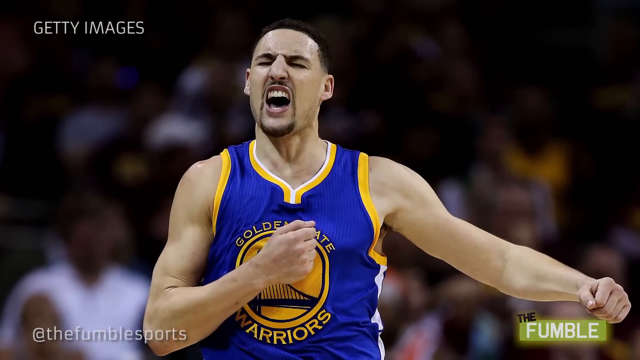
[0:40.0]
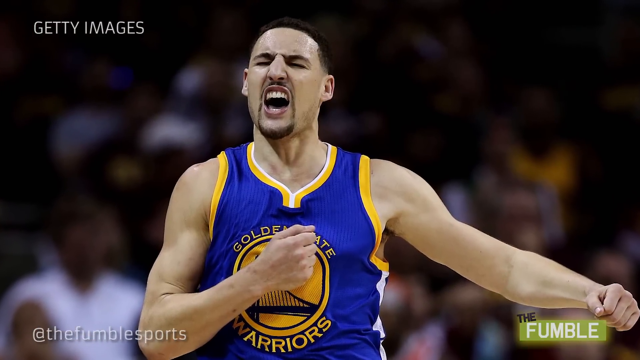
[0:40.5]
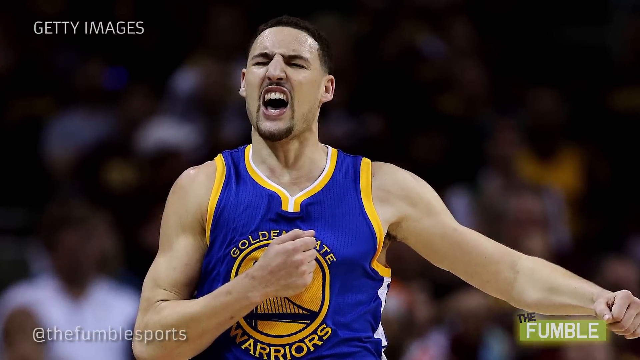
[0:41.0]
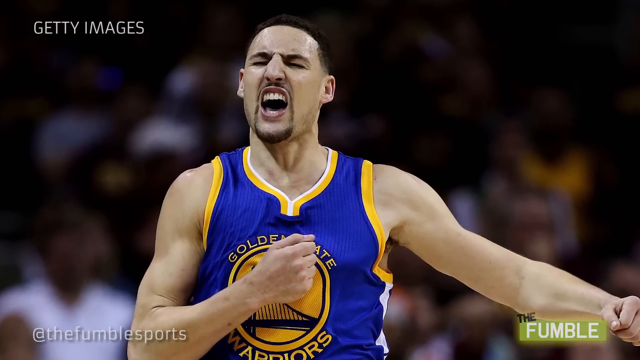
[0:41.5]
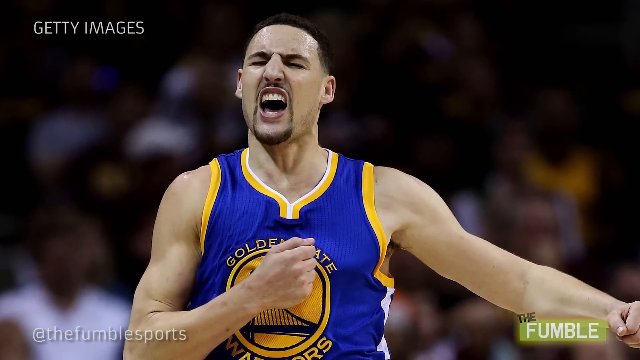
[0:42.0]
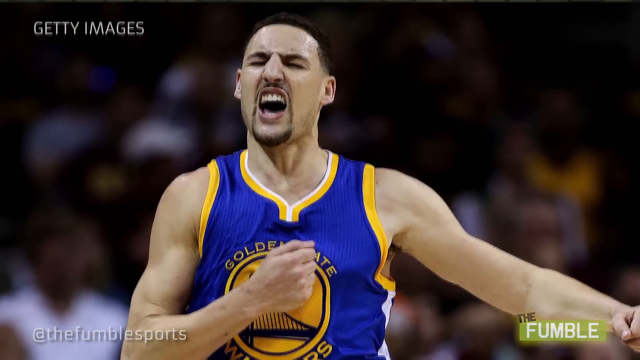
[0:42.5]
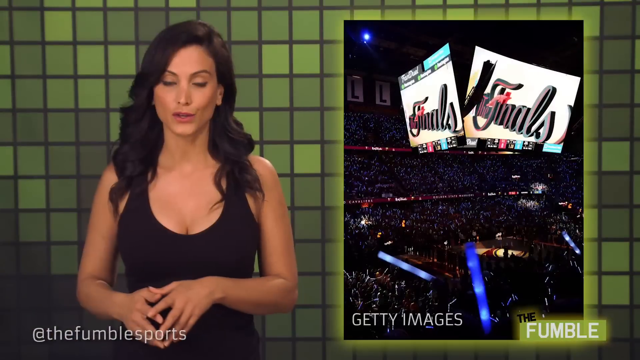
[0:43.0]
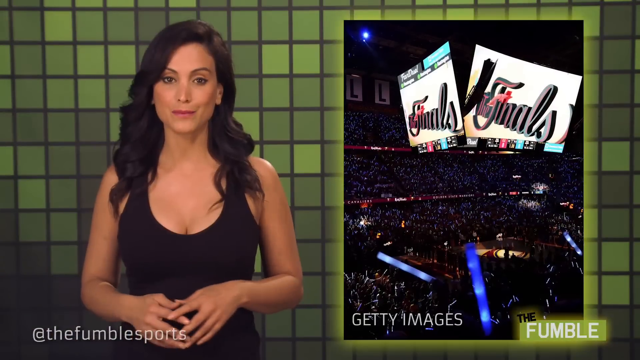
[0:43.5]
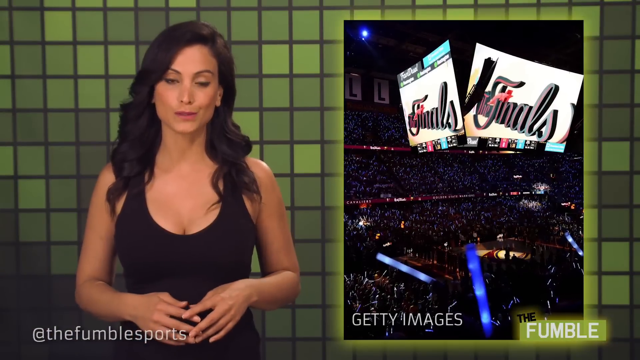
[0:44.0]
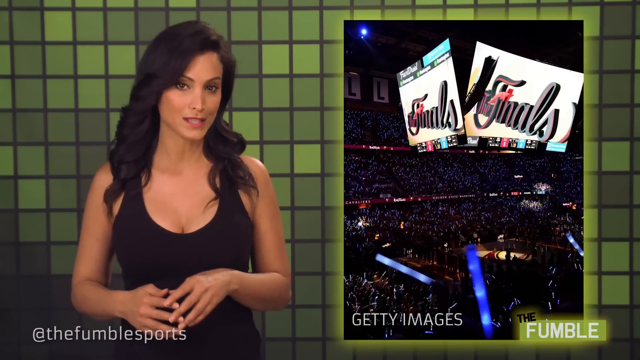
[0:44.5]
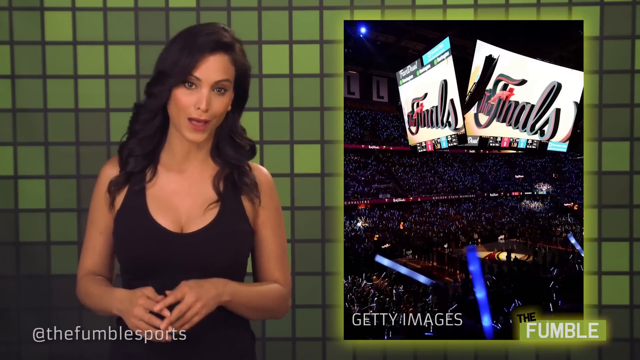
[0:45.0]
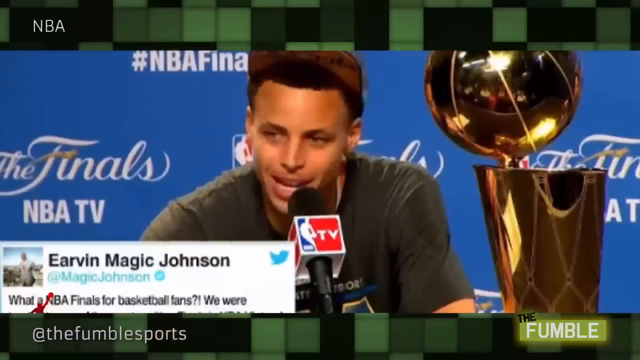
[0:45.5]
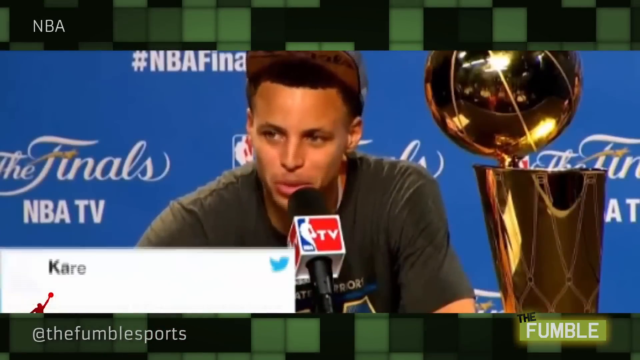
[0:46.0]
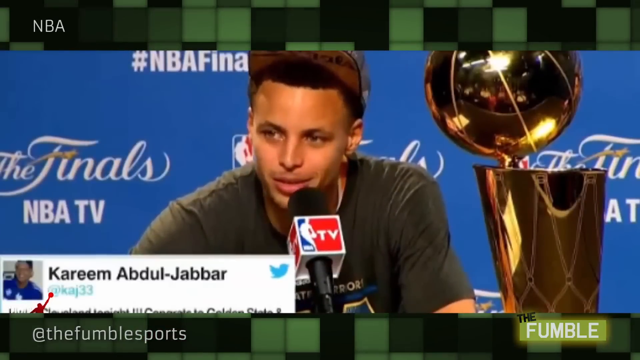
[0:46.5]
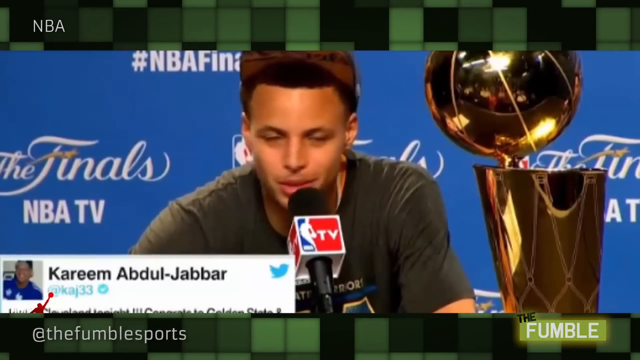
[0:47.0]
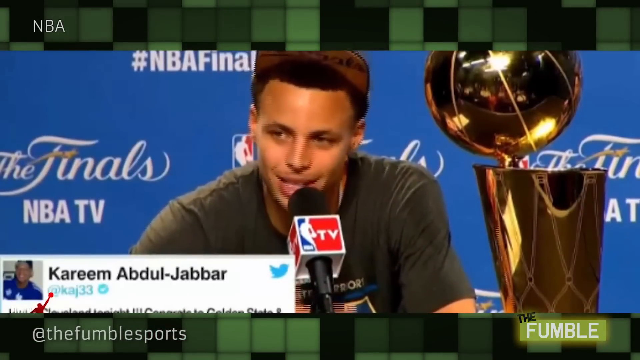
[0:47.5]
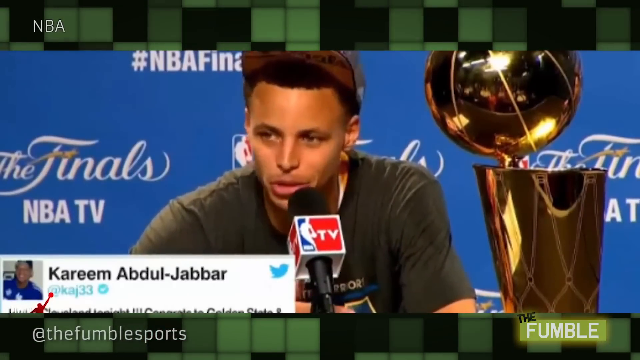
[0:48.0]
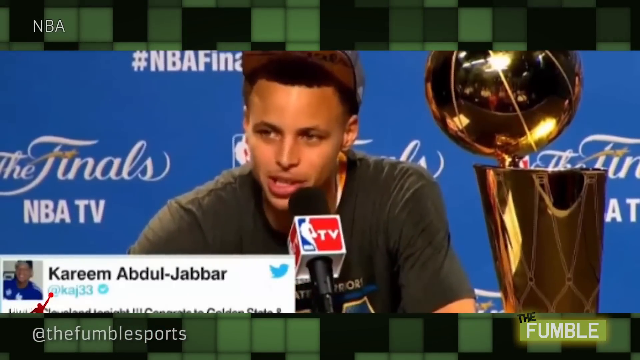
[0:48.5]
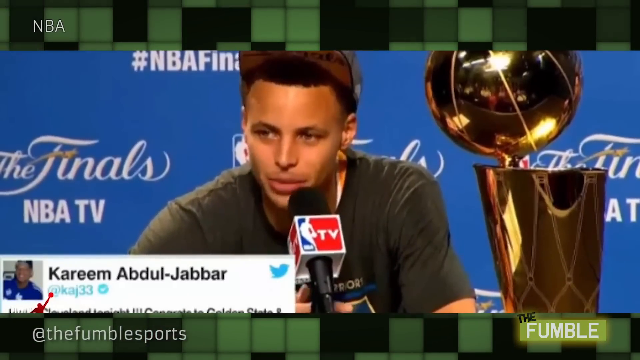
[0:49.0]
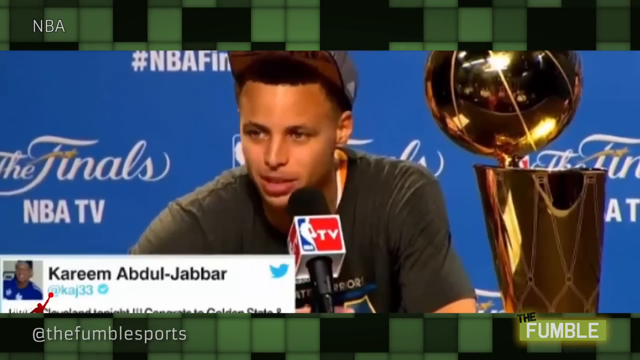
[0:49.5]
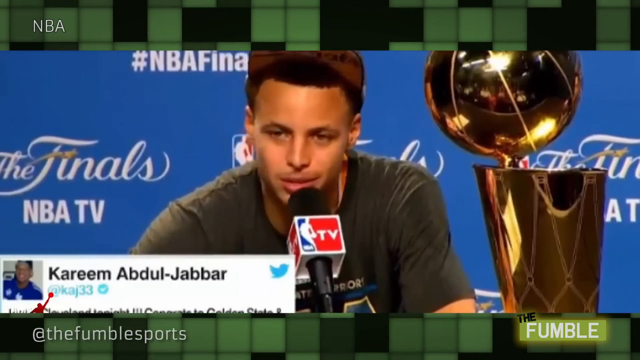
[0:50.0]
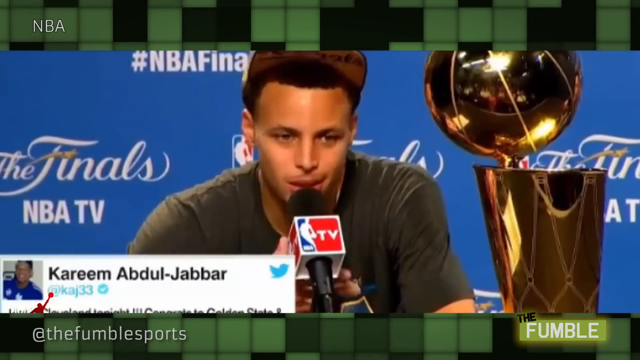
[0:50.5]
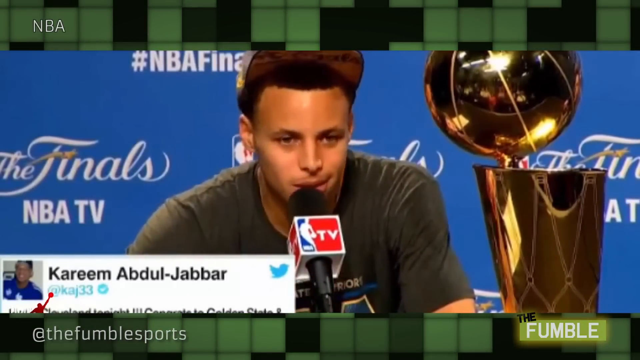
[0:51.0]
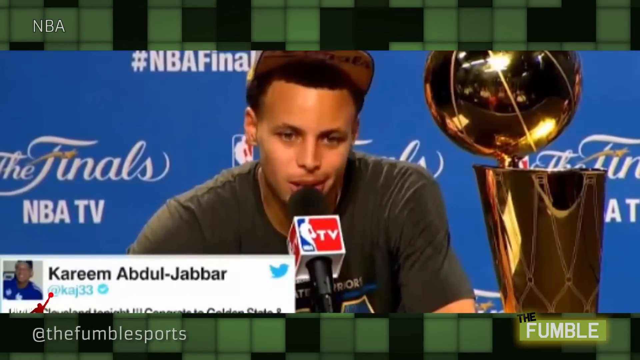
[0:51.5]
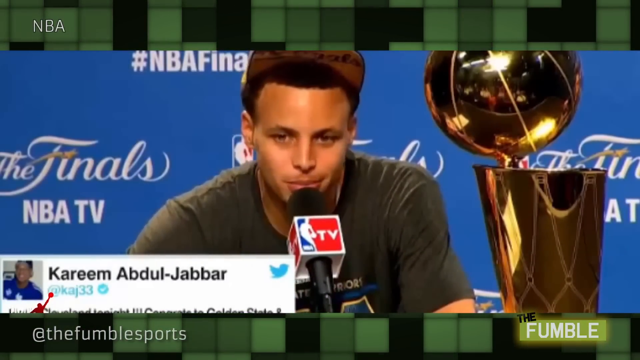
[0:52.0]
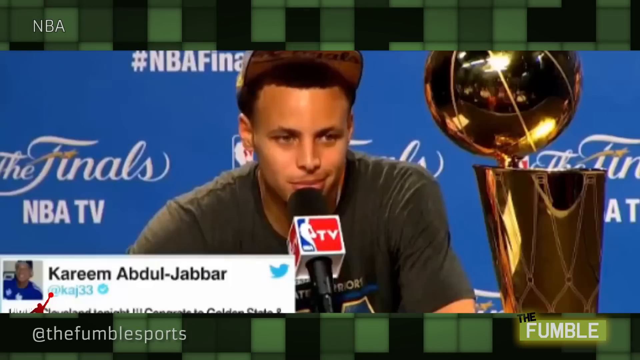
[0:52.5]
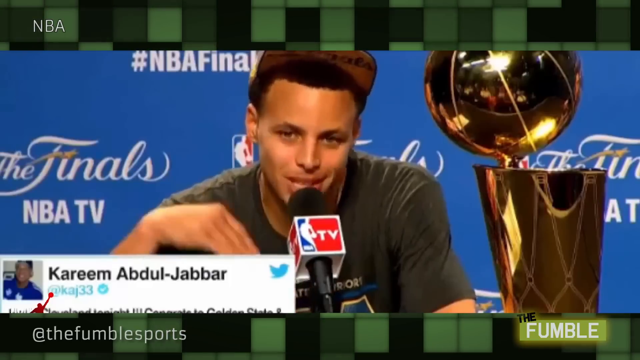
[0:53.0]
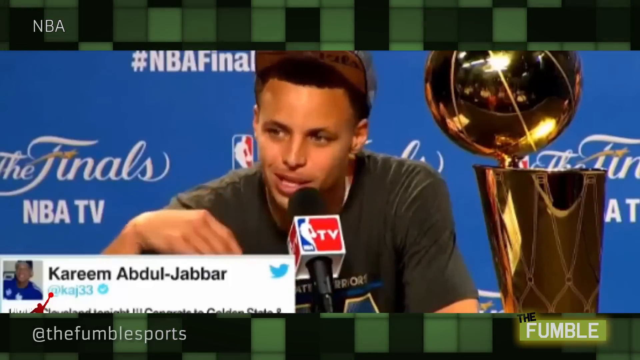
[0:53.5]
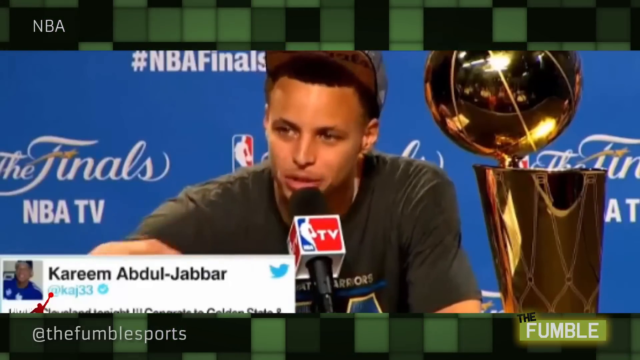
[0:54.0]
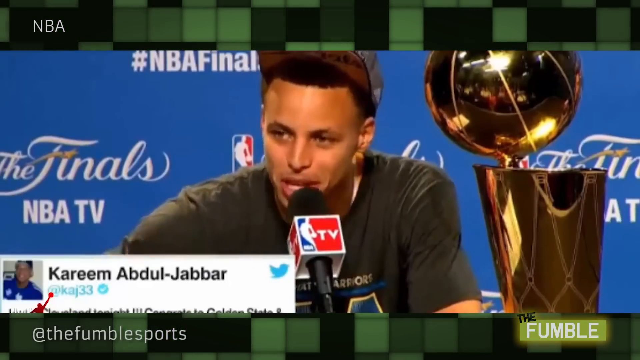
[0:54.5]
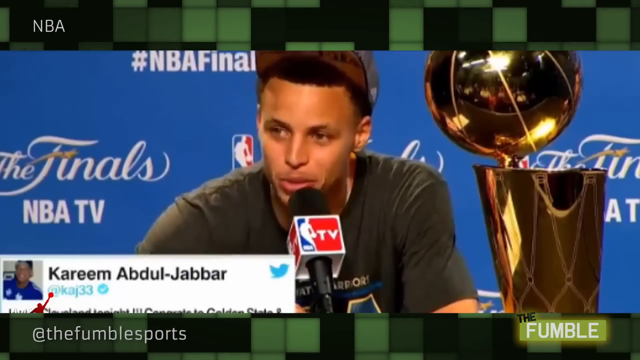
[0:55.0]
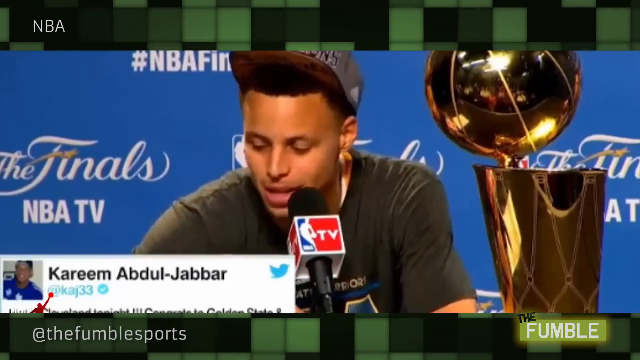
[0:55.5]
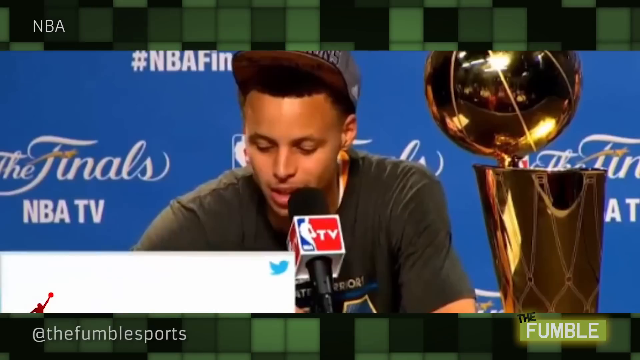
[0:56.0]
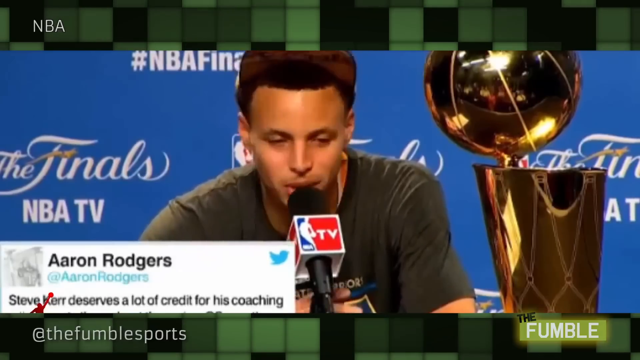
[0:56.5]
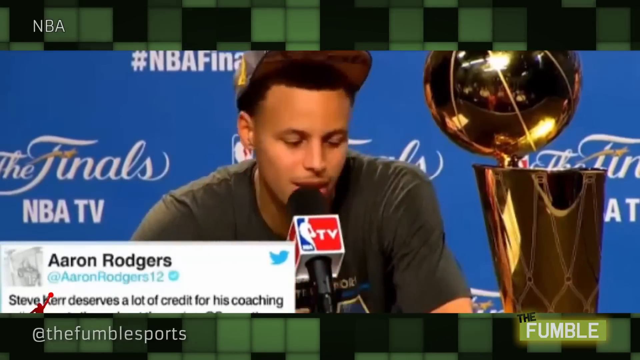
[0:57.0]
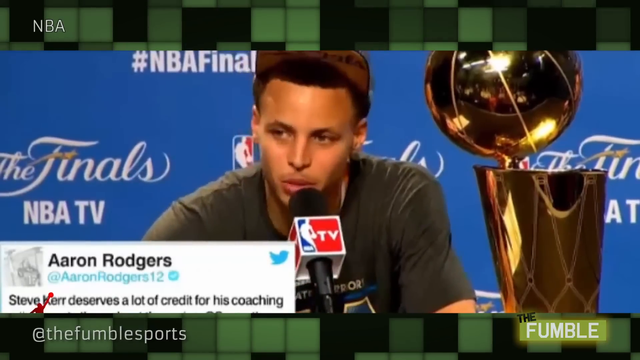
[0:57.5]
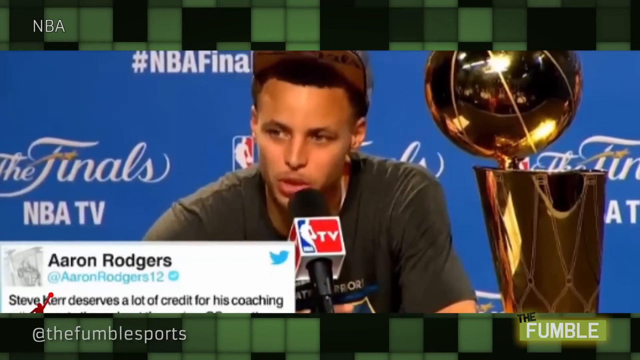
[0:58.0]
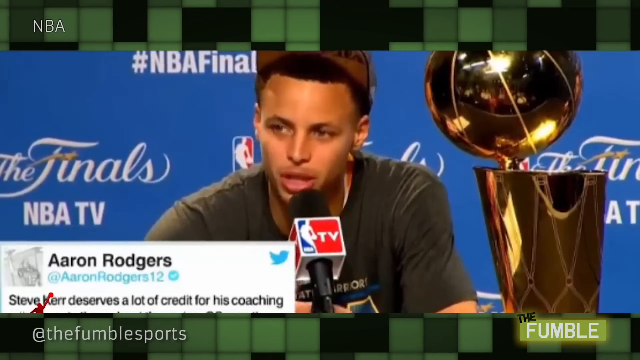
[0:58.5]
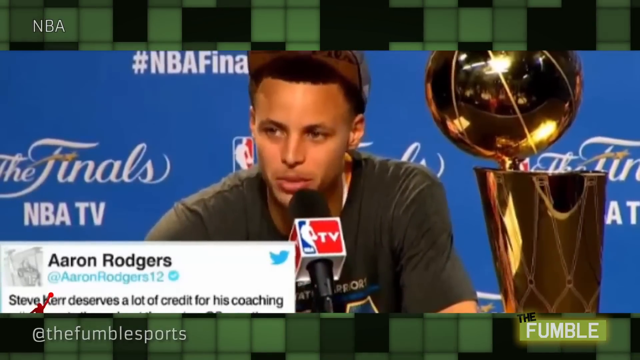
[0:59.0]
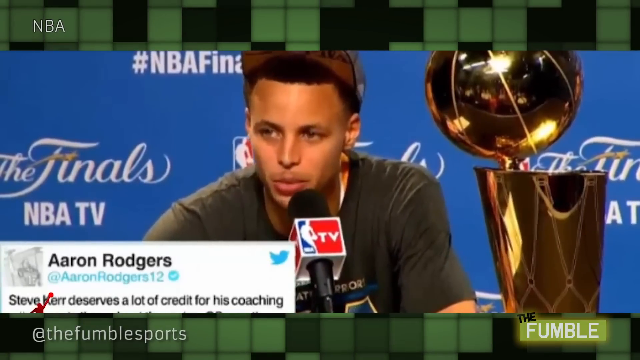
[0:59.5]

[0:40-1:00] An image shows the basketball player in a blue and yellow Golden State Warriors uniform, right hand clenched over the heart and left arm extended out to the side with the fist closed, appearing to shout or celebrate. The image zooms in toward the player's face. The video transitions back to the woman in front of the green chequered background, talking to the camera with her fingers outstretched and slightly overlapping each other over her belly. On the right-hand side a video plays with finals text at the top, showing a court full of people. A top-to-bottom transition follows, revealing an interview in which a basketball player sits holding a microphone in his left hand up to his mouth, with the trophy on his right and the blue NBA finals TV logo in the background. In the bottom left corner is the outline of a tweet from Kareem Abdul-Jabbar that cannot quite be read. As the player talks to the camera, he shakes his head slightly and repeatedly lifts his right hand up and down. He looks down to the right and down to the left, constantly moving his right hand up and down as he talks.